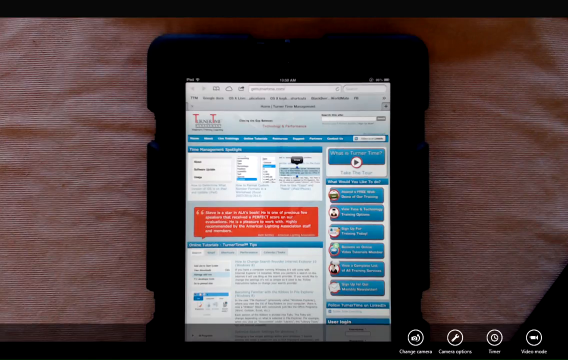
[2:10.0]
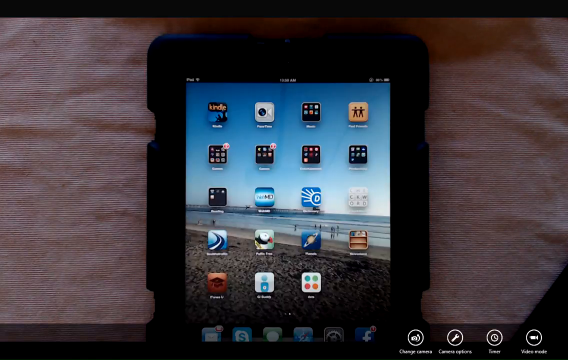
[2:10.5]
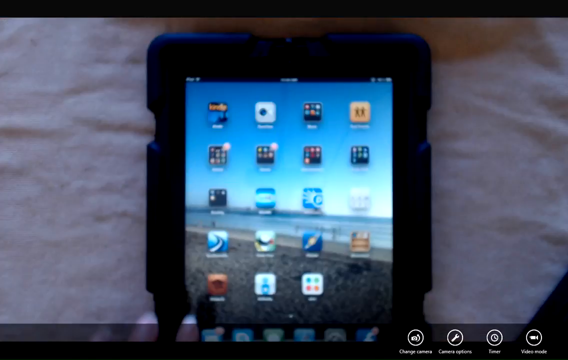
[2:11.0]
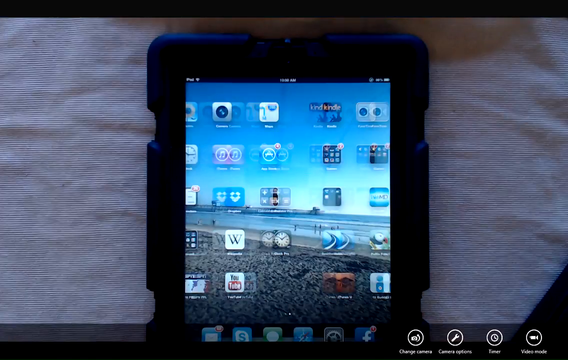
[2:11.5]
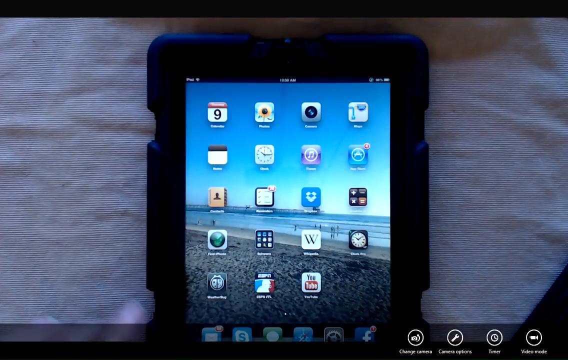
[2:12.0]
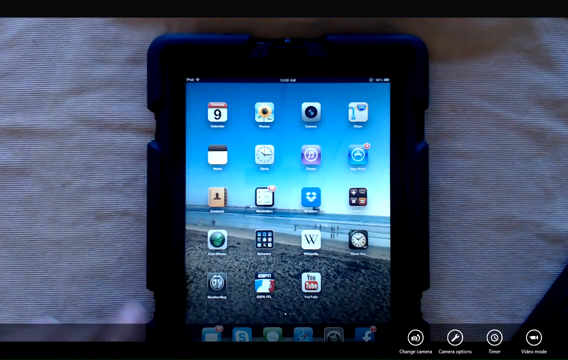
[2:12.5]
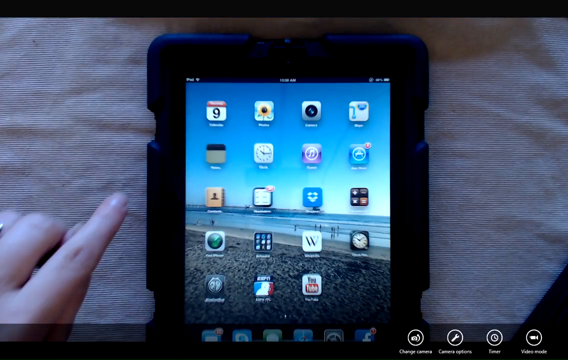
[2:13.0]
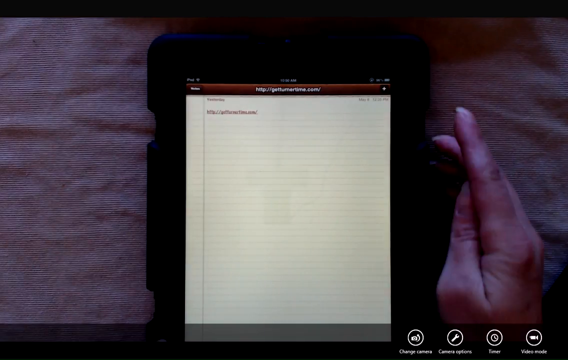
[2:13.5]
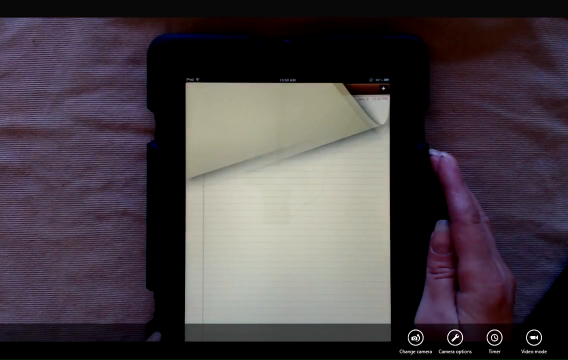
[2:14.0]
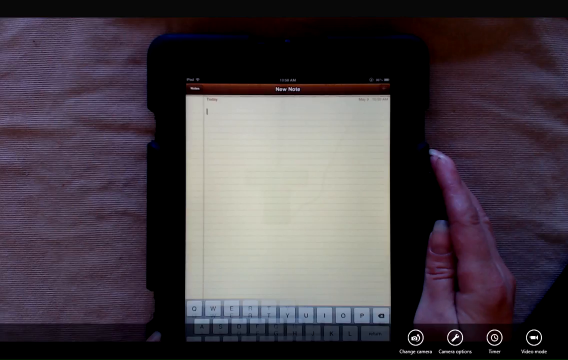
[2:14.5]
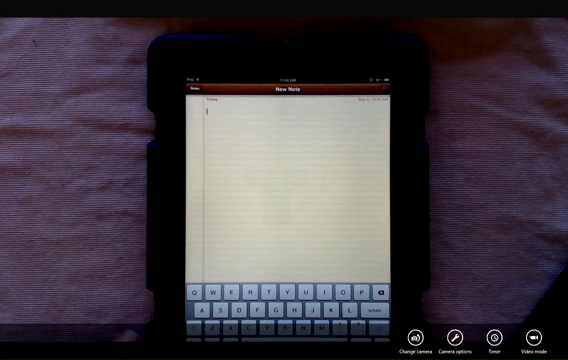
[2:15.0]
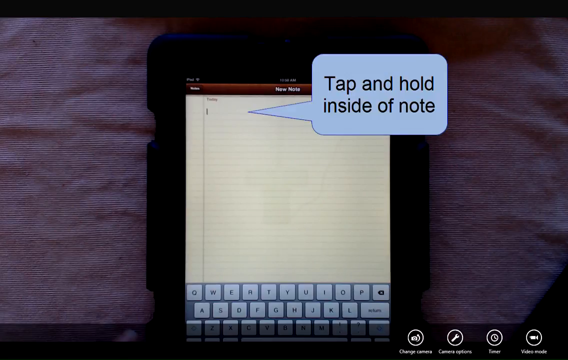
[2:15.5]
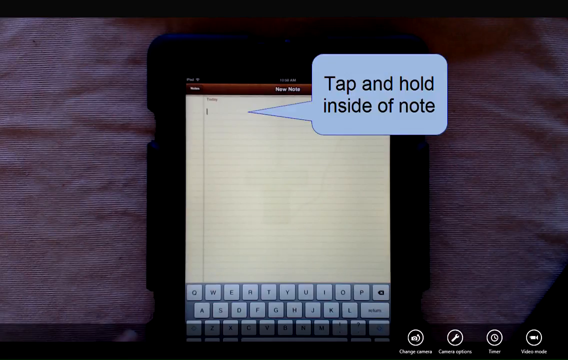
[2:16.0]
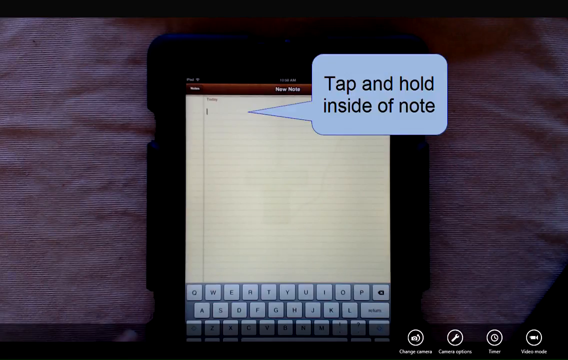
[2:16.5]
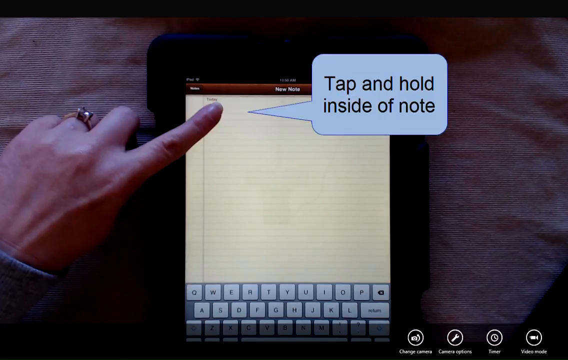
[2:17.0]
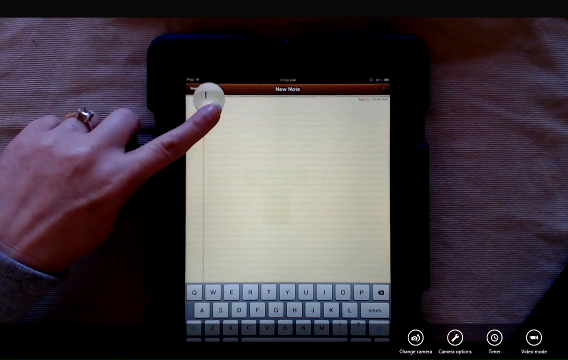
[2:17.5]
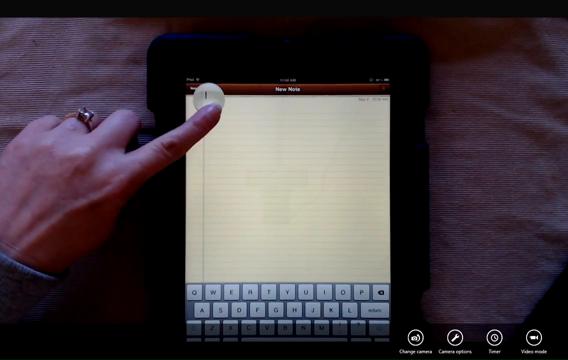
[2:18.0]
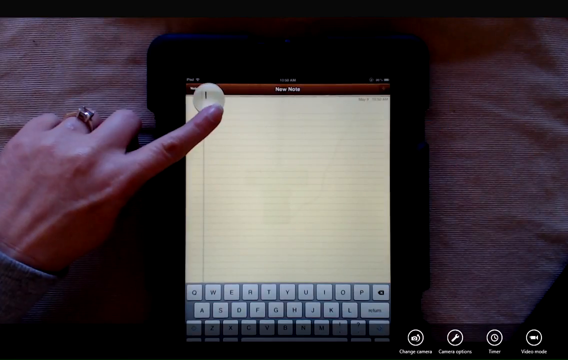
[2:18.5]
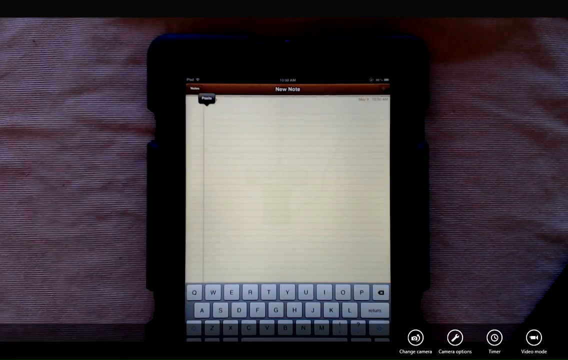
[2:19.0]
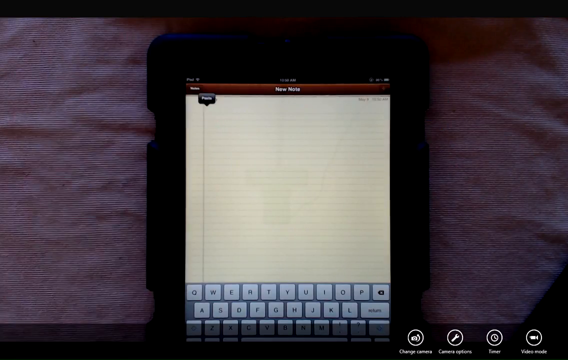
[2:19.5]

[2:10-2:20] The website is briefly visible on the tablet, then the video quickly cuts to the device's home screen with its tabs and icons visible. The screen gets very bright, with a bit of overexposure, and the user swipes through to another page of the home screen. The left hand comes into view with the left index finger pointing, then the video cuts to what appears to be a notepad on the device. The right hand rests next to the tablet before the page flips on the notepad on the screen, and the hand is no longer visible.